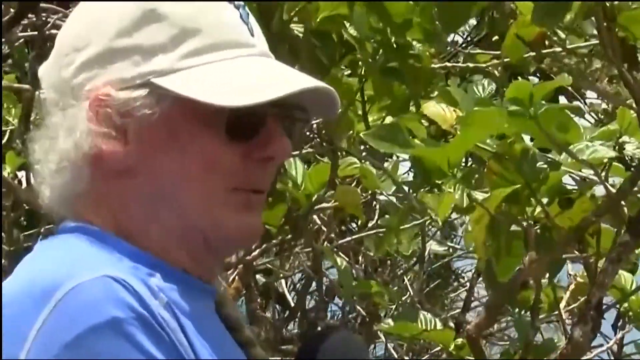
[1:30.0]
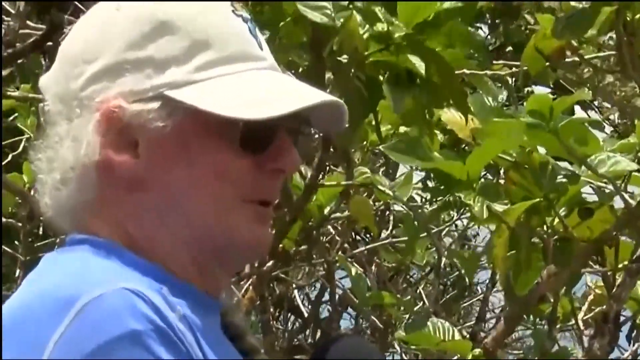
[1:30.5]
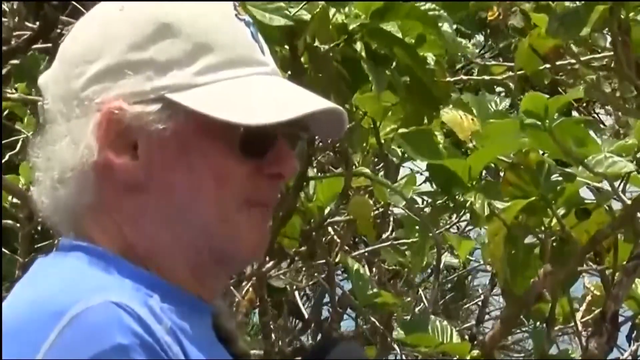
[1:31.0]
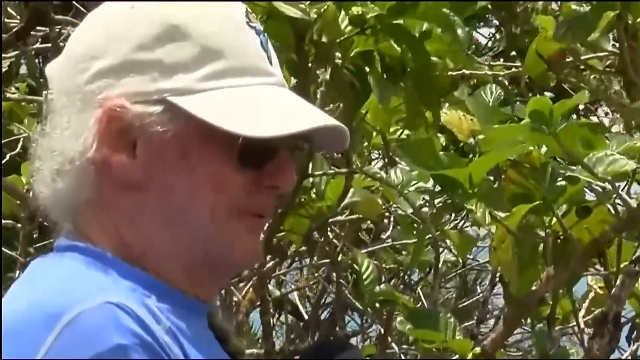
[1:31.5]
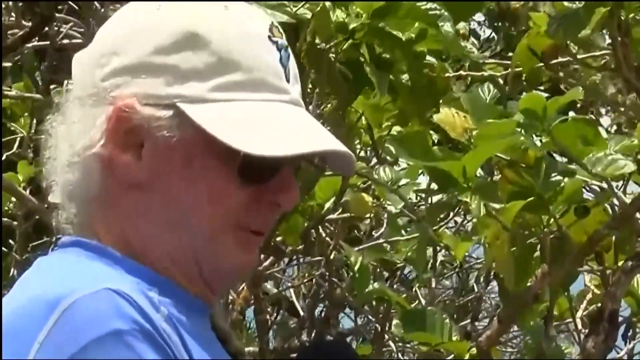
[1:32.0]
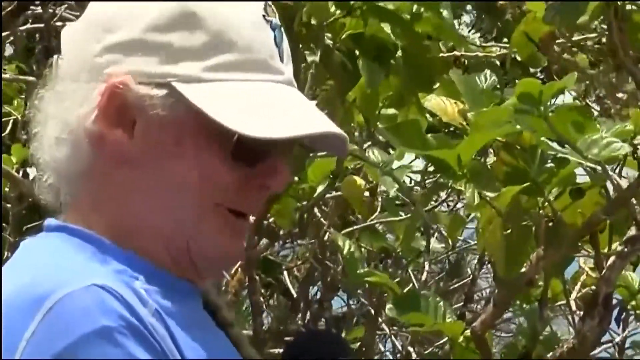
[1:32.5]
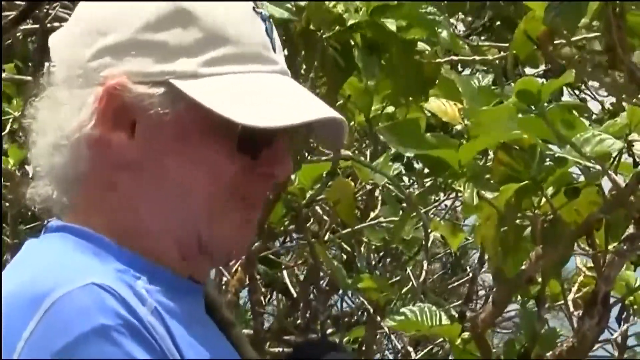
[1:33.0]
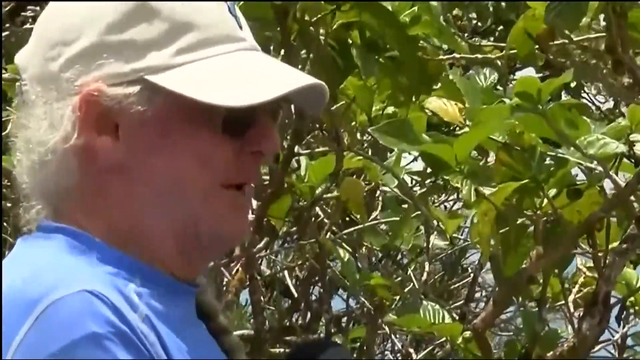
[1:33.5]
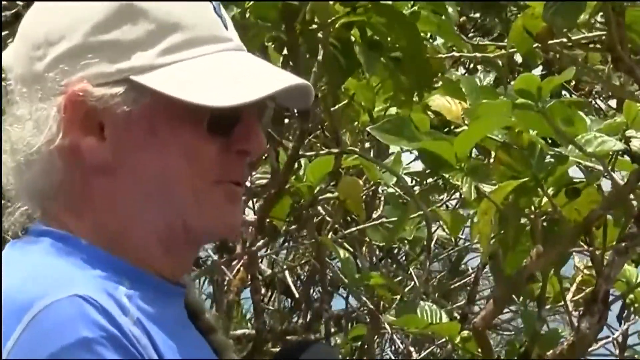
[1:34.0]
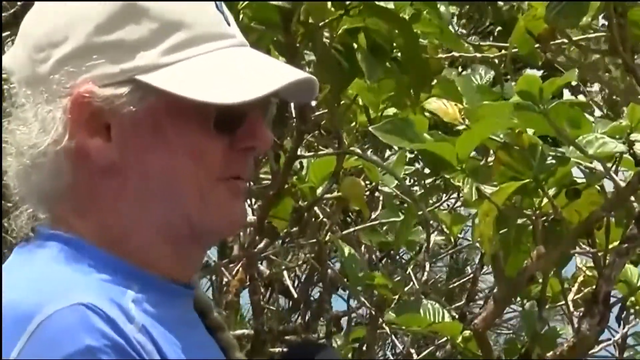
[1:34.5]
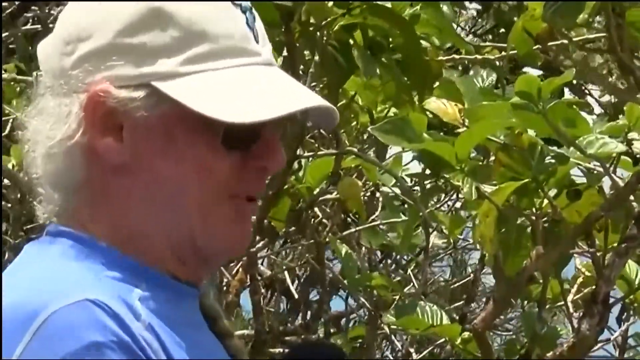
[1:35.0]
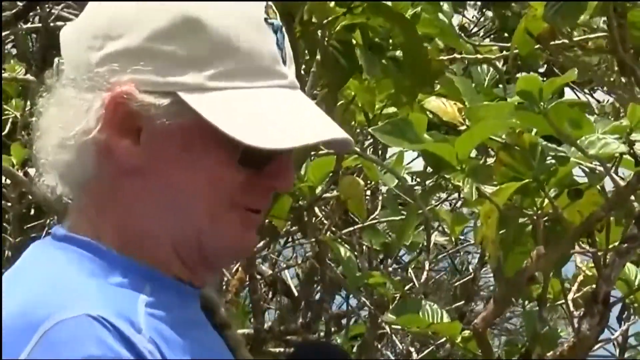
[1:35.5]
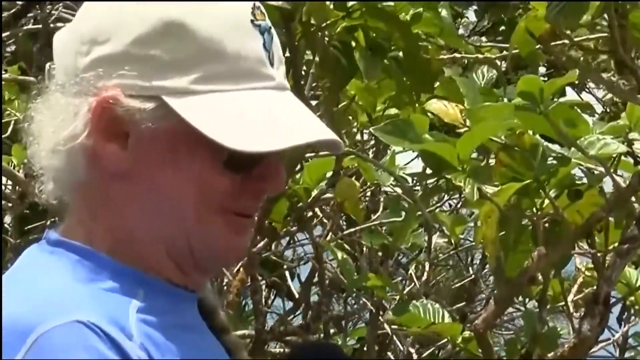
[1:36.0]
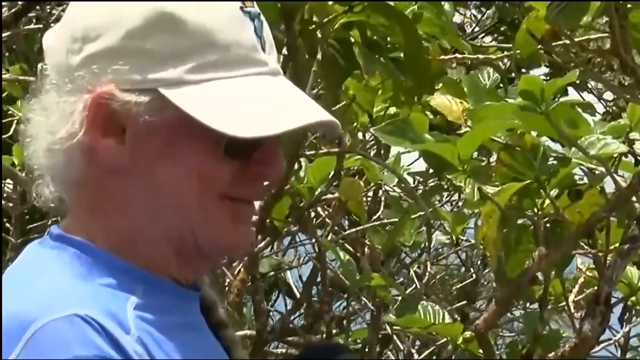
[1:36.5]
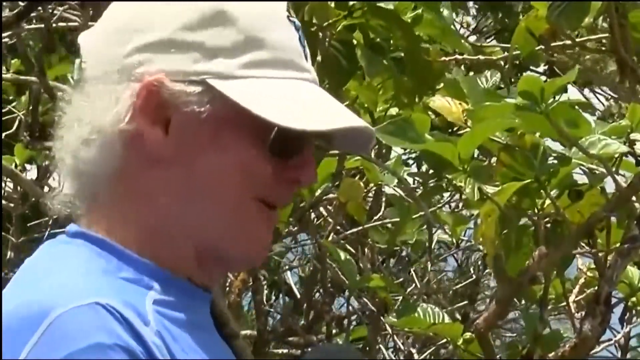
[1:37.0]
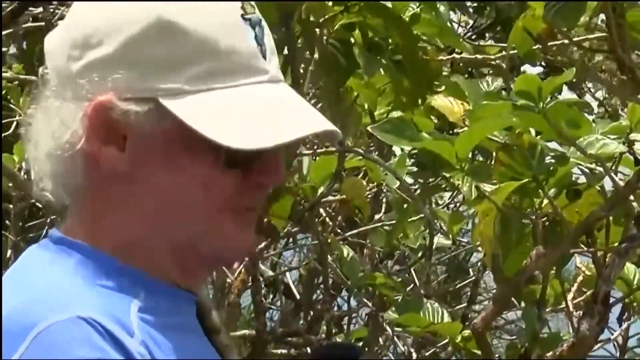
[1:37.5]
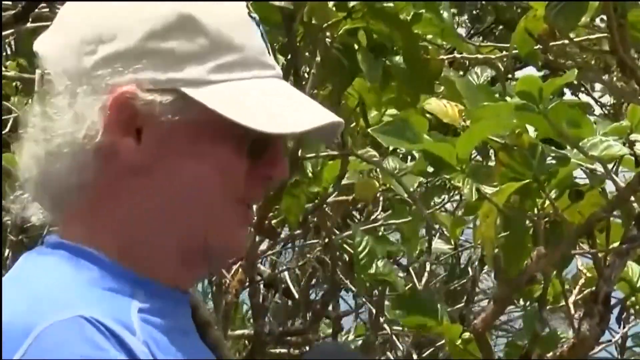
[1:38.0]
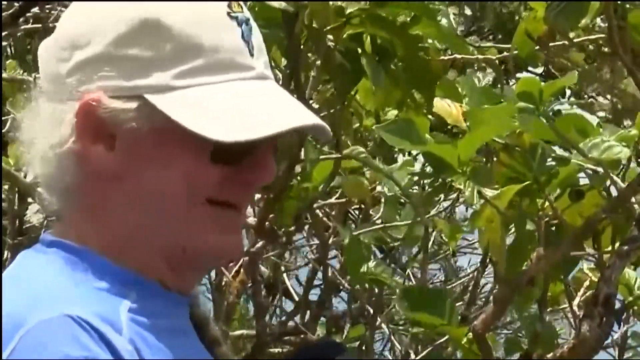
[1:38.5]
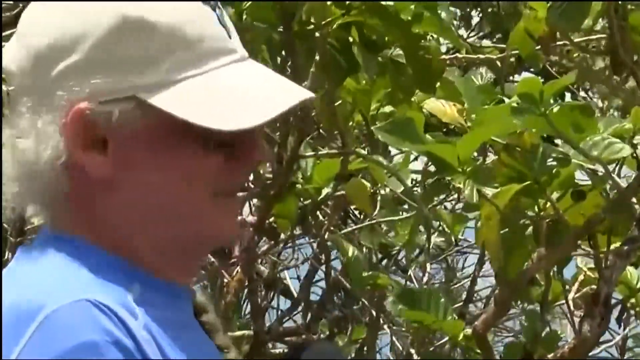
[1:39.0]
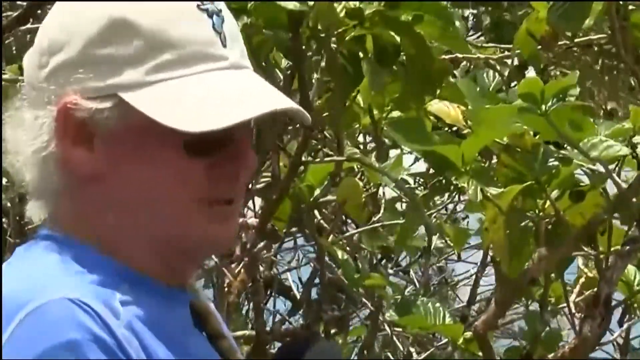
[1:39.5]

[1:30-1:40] An older gentleman appears on the left side of the screen, facing to the right and talking to somebody not visible on camera, probably a reporter. He wears an off-white baseball cap with a small logo of some sort in the center, a light blue shirt and dark-tinted sunglasses, and has white hair. He is standing in front of green tree leaves, and his entire background looks like just trees and branches. He shakes his head a bit as if he can't believe it, shakes his head more, and shrugs his shoulders a bit. His skin is a bit reddish, possibly from being in the sun a lot.